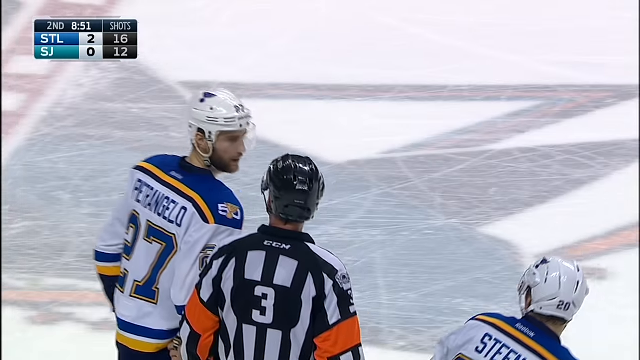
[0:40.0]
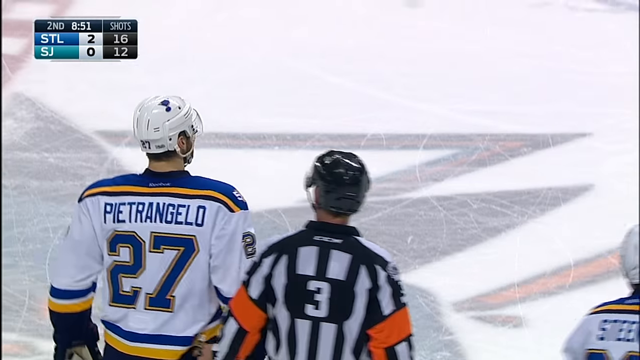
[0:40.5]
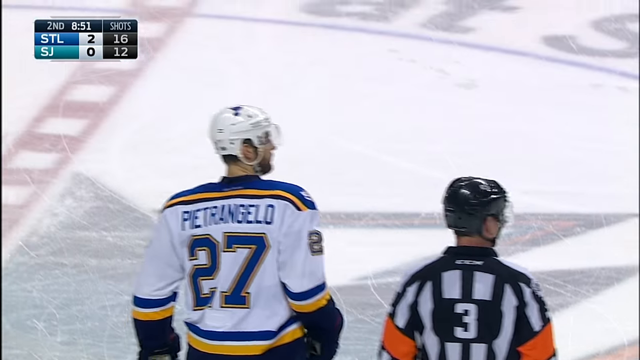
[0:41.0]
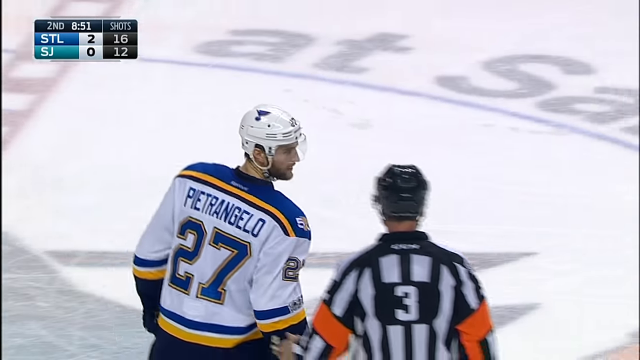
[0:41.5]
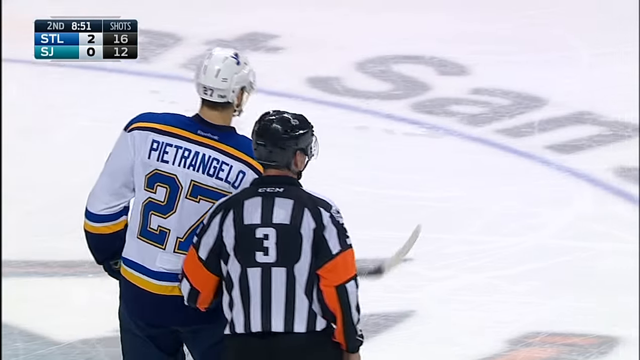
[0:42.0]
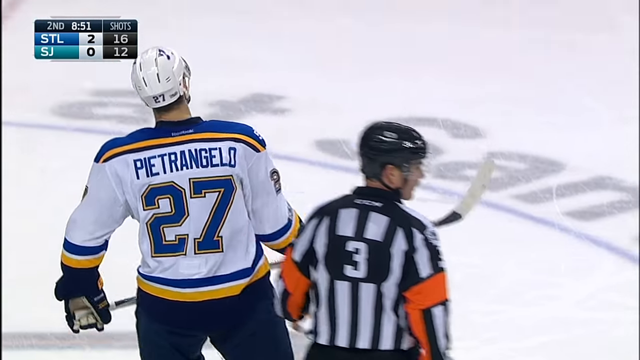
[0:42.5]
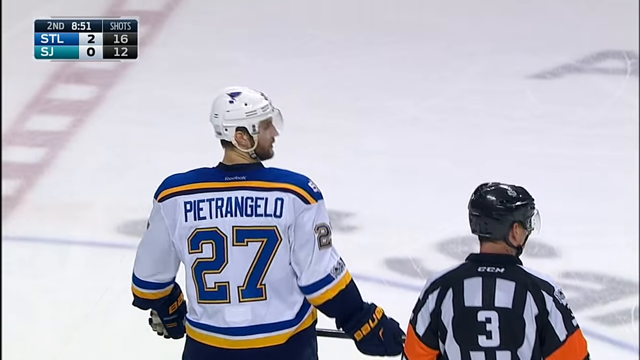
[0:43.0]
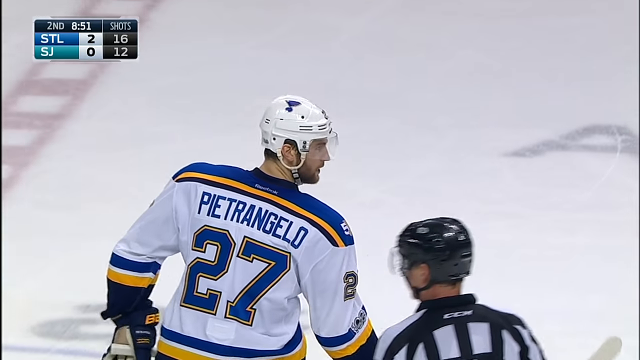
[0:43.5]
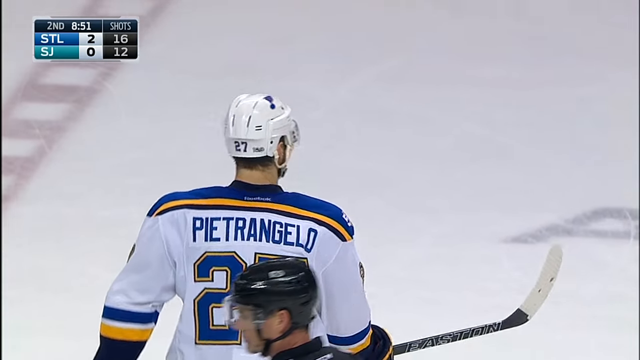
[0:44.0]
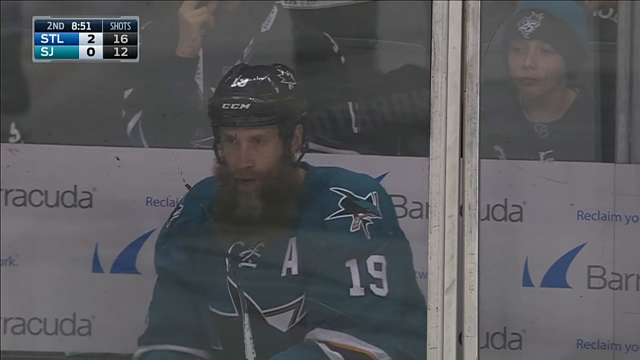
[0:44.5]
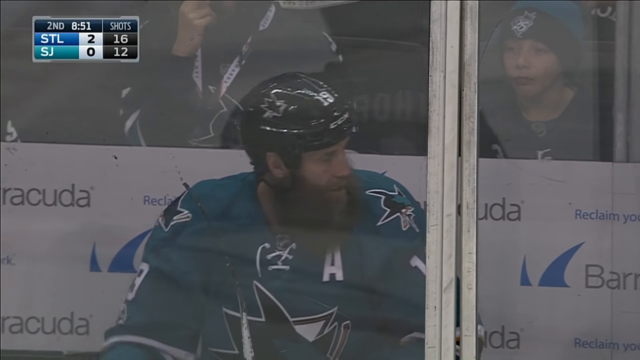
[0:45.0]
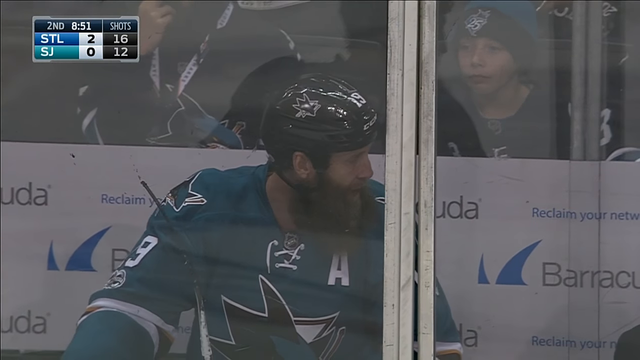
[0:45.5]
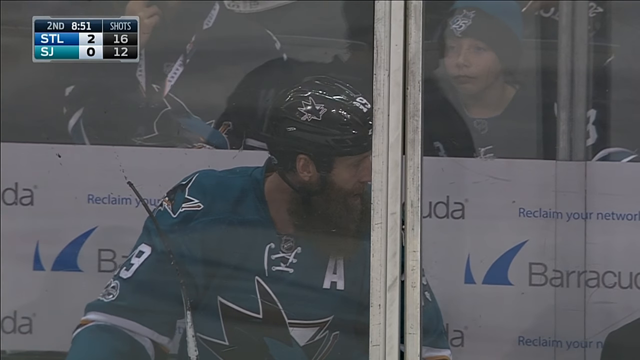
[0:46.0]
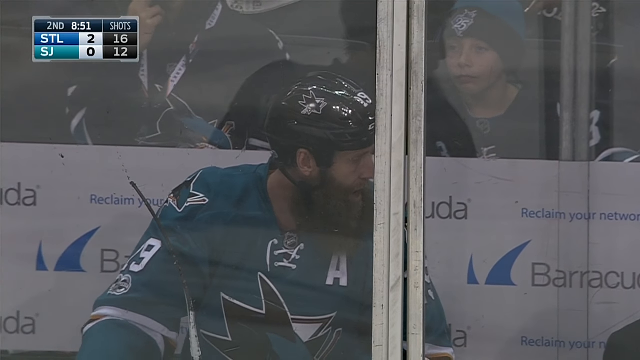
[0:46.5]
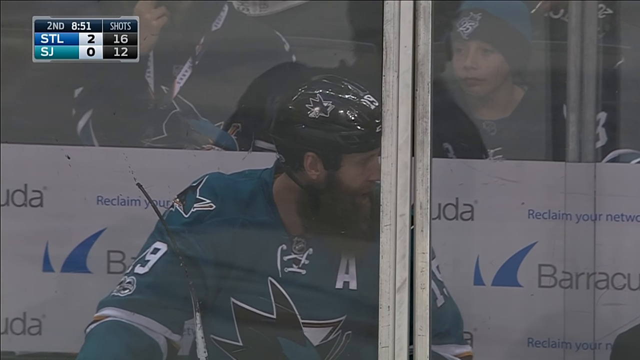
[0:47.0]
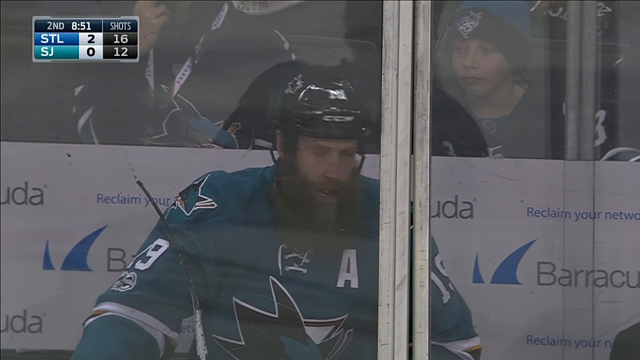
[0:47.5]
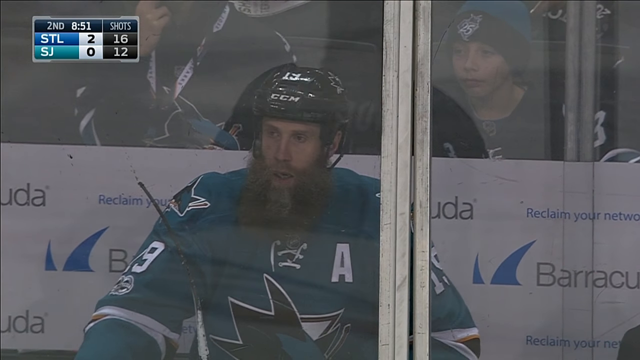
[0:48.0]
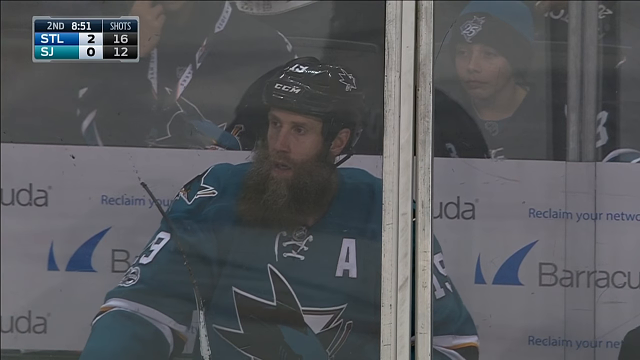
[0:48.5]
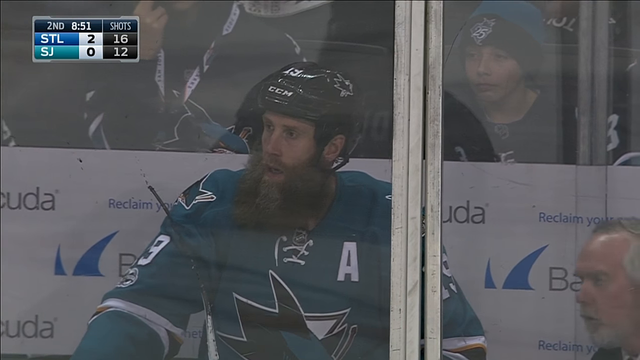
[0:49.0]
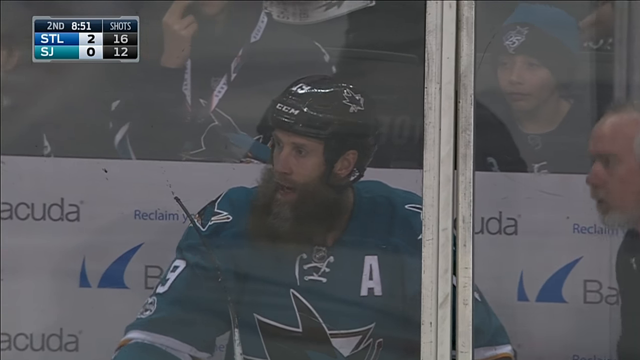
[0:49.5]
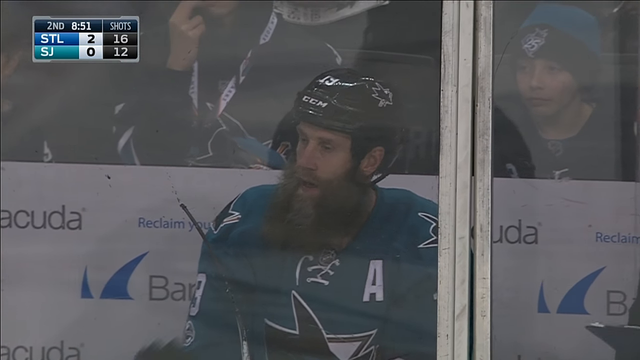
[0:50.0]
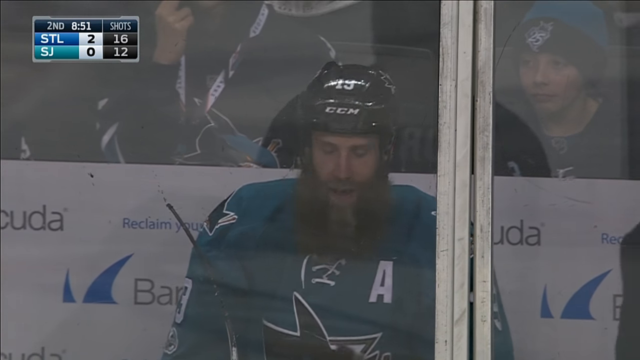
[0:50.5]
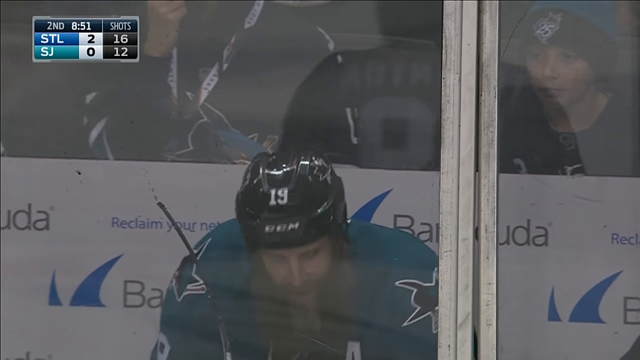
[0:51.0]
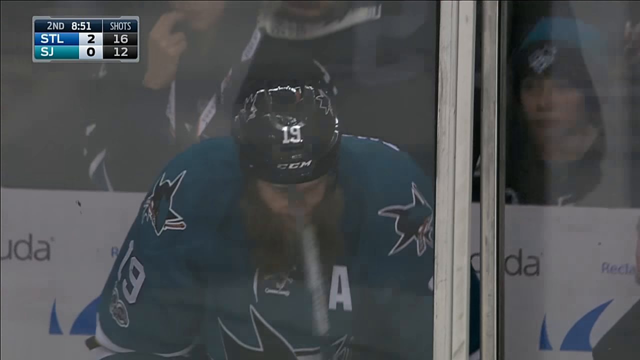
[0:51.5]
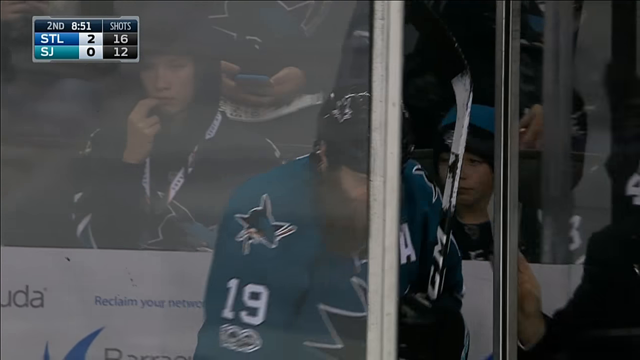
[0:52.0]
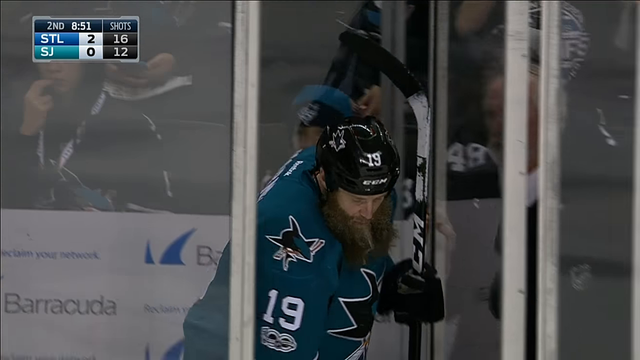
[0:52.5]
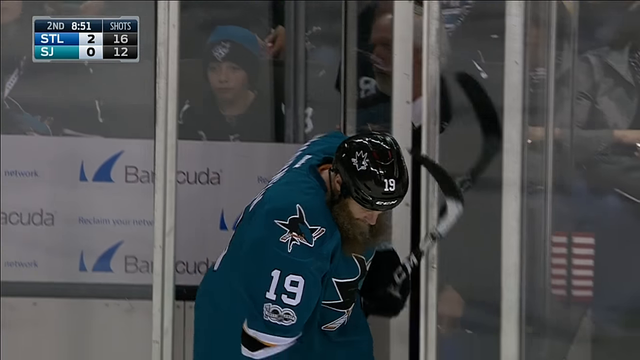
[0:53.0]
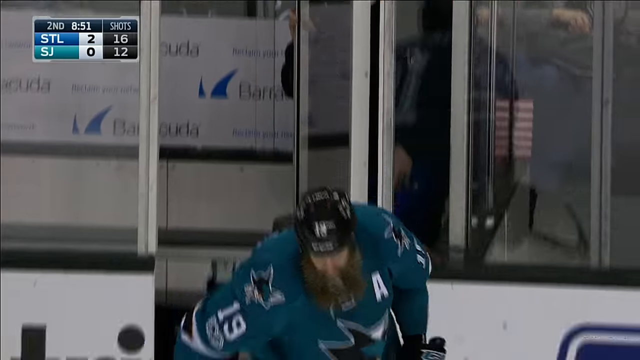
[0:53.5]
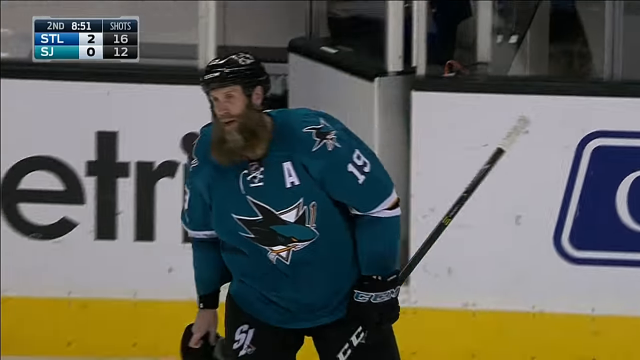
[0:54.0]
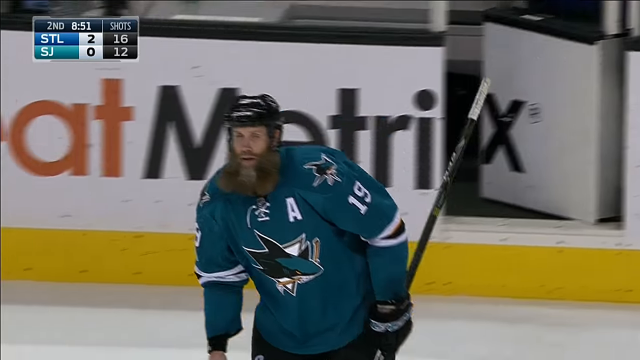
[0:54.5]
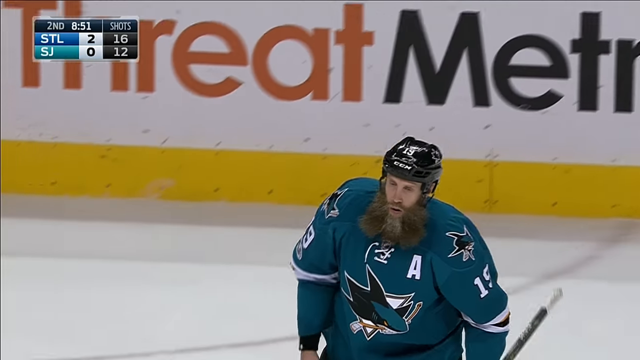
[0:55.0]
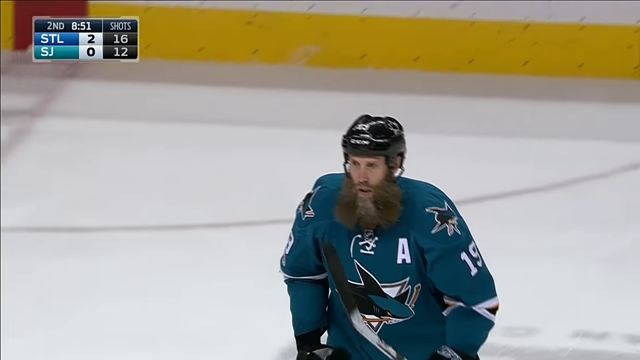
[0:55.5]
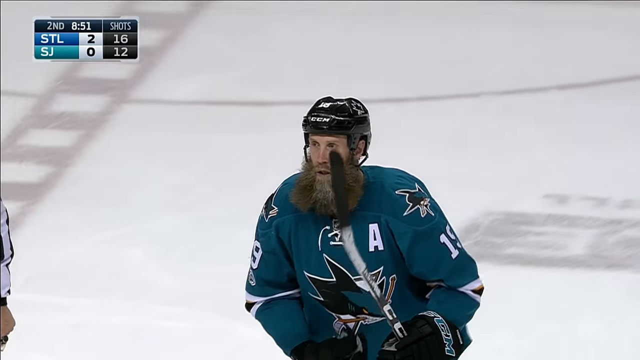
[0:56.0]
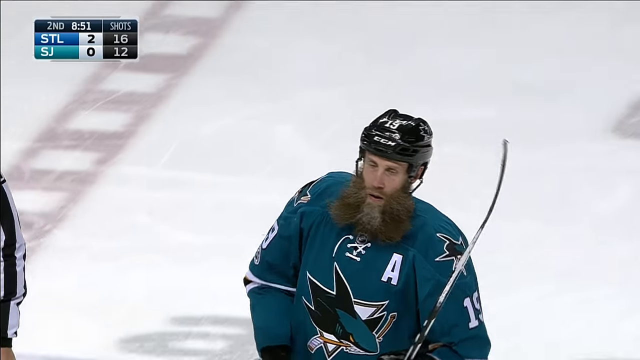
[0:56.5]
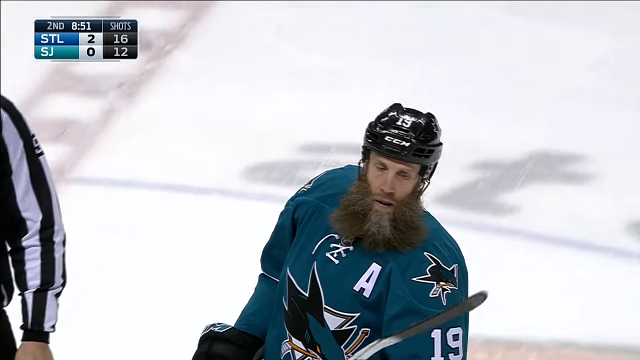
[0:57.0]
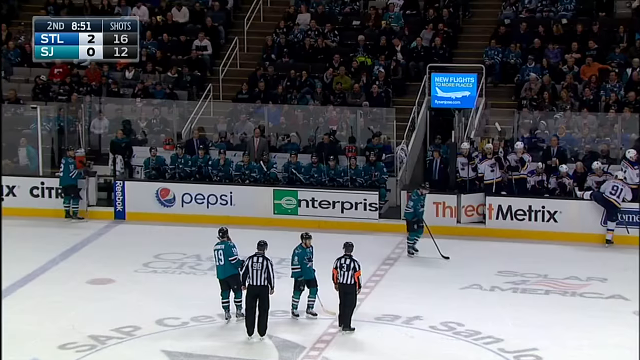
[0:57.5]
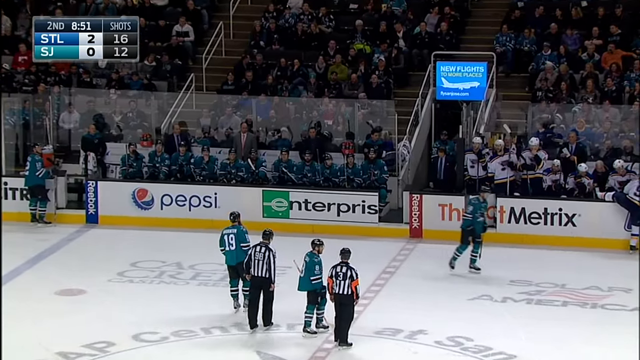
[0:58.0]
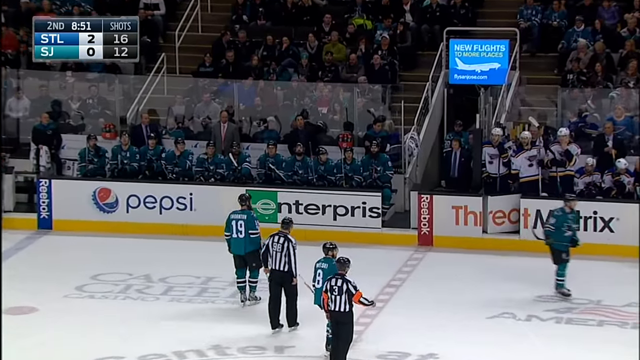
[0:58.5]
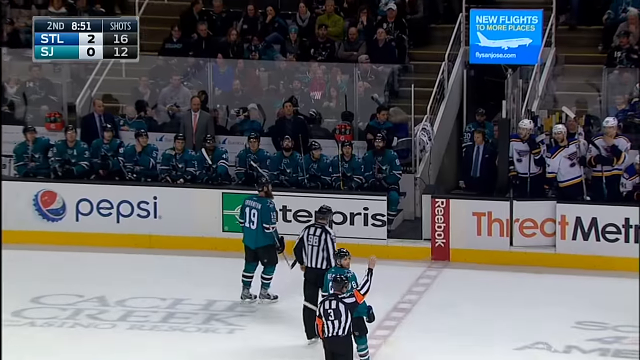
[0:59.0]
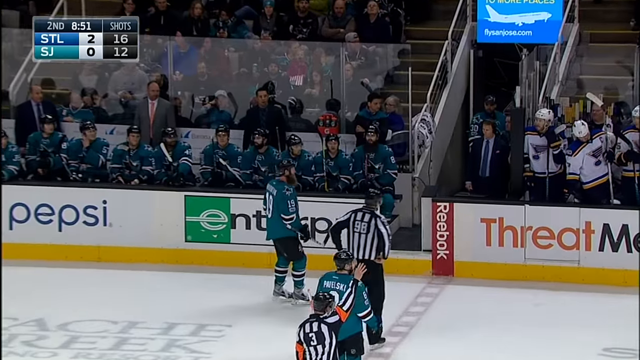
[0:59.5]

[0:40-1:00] In an ice hockey game, a player named Pietro Angelo, number 87, plays for a team in white, blue and gold jerseys. A player from the teal team, number 19, who has a full shaggy beard, goes to sit out in a timeout area and then goes back into the game. Fans are sitting behind number 19 while he is in the timeout box, and a Barracuda sign is in the timeout box. A referee in a referee uniform with orange bands on his arms, number 3 on his back, skates around. Pepsi and Enterprise signs are around the arena.